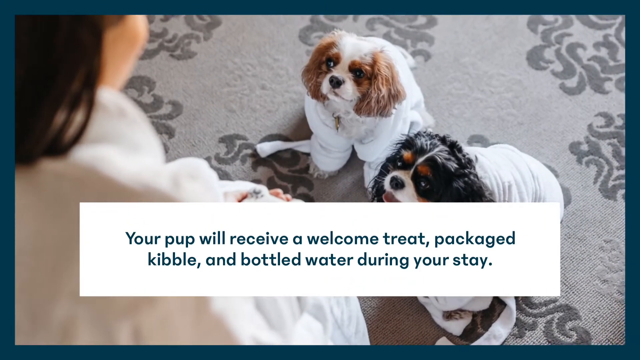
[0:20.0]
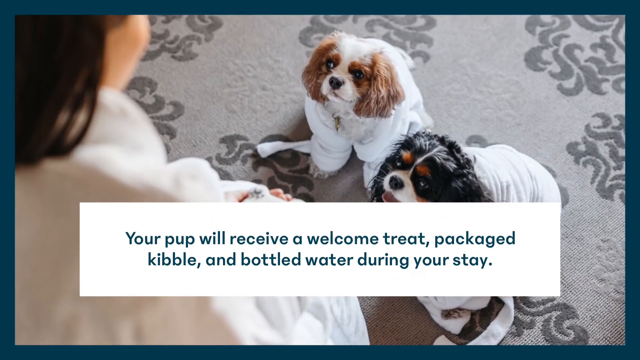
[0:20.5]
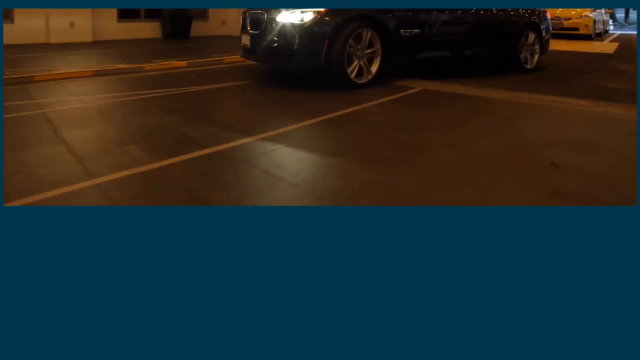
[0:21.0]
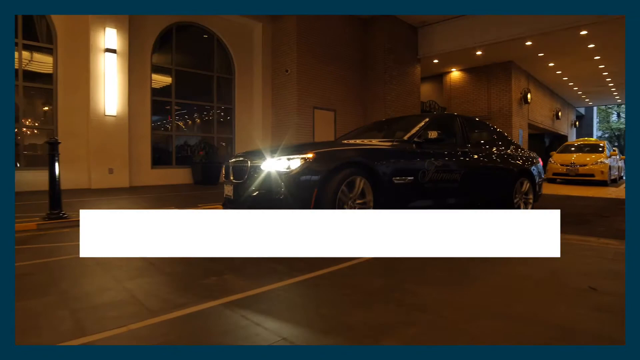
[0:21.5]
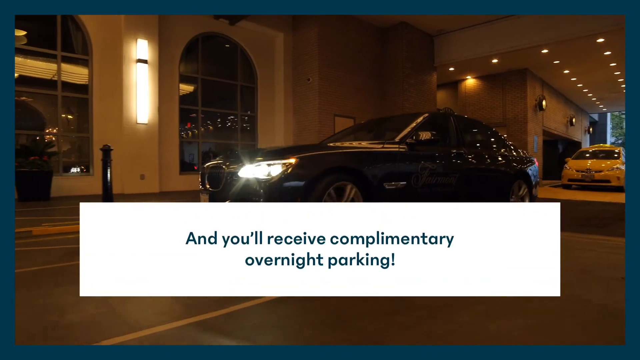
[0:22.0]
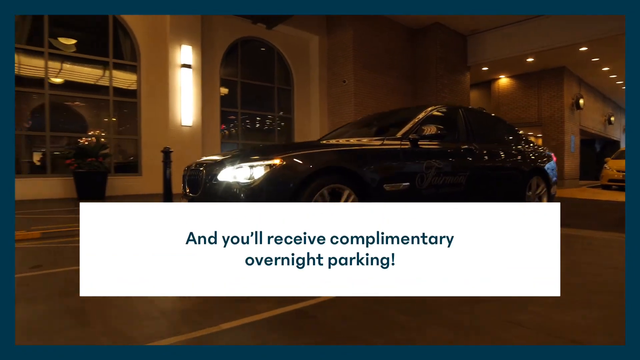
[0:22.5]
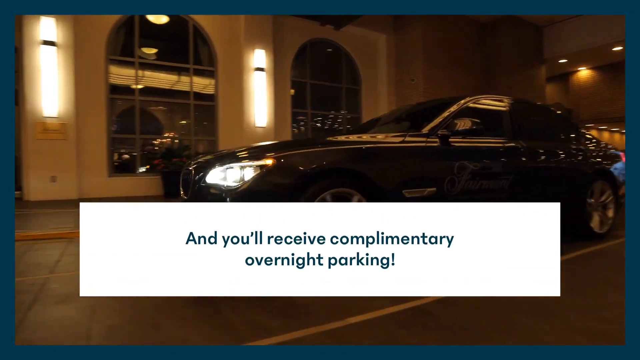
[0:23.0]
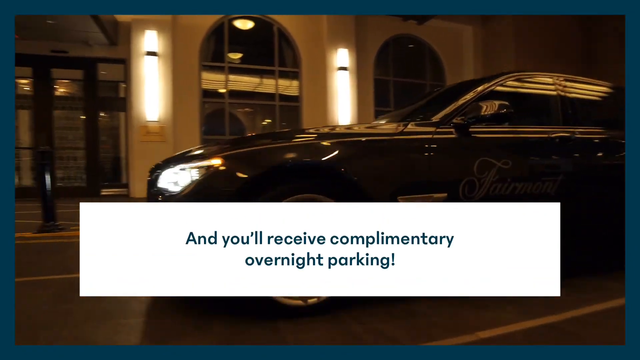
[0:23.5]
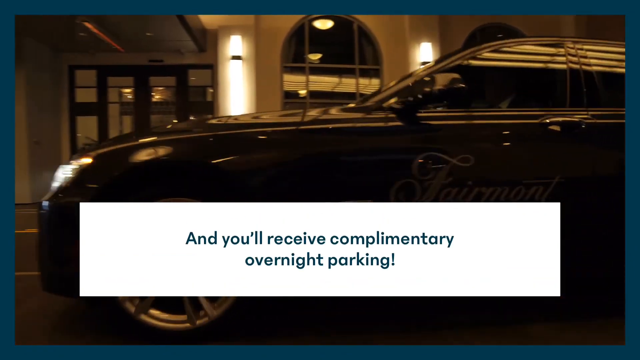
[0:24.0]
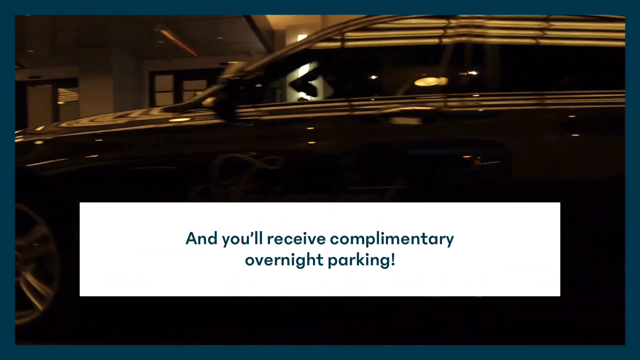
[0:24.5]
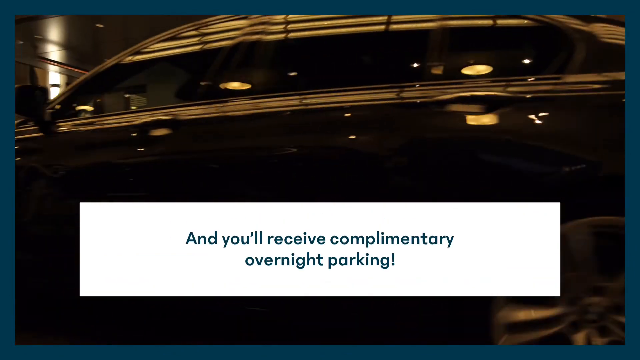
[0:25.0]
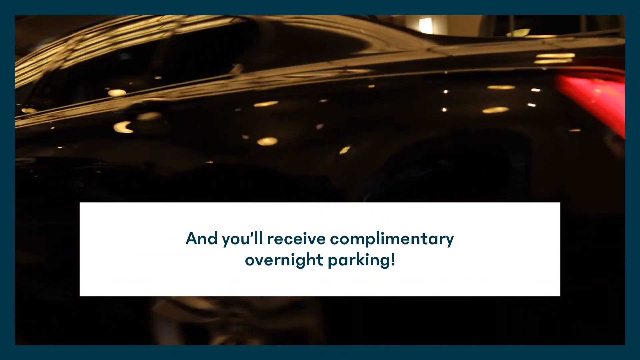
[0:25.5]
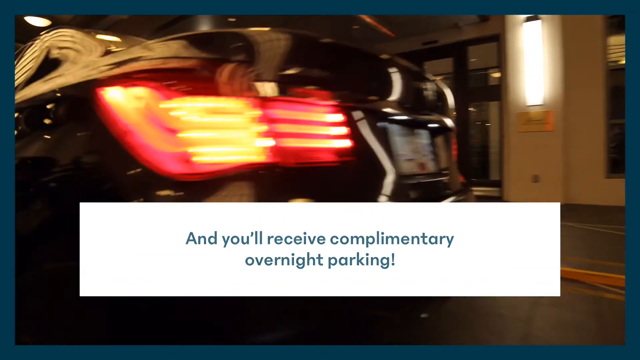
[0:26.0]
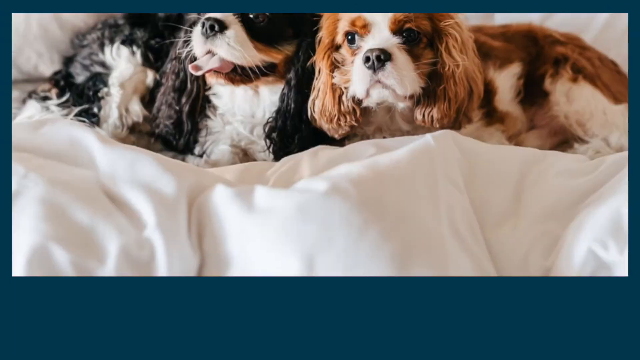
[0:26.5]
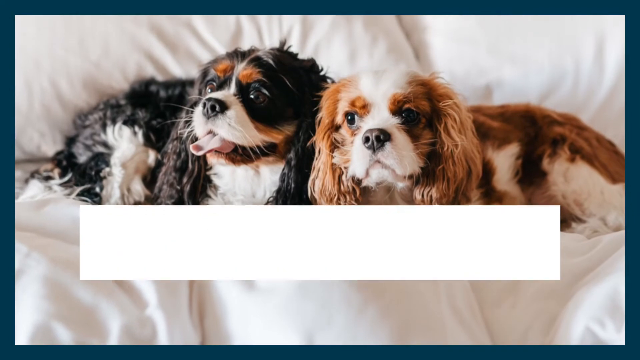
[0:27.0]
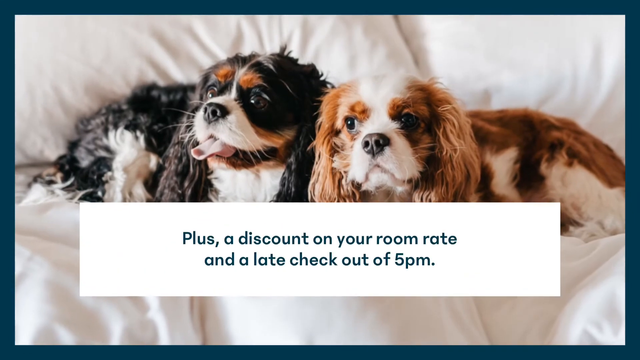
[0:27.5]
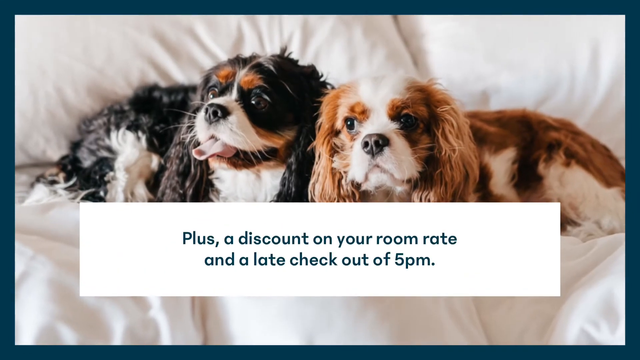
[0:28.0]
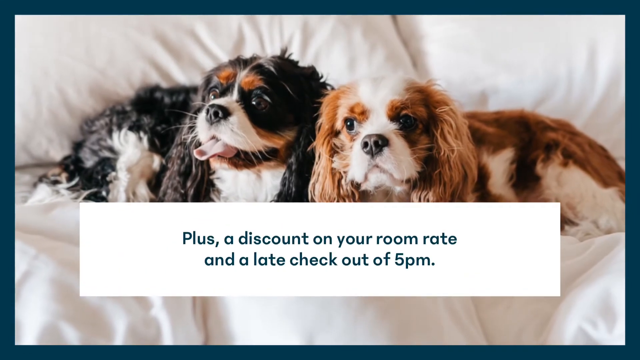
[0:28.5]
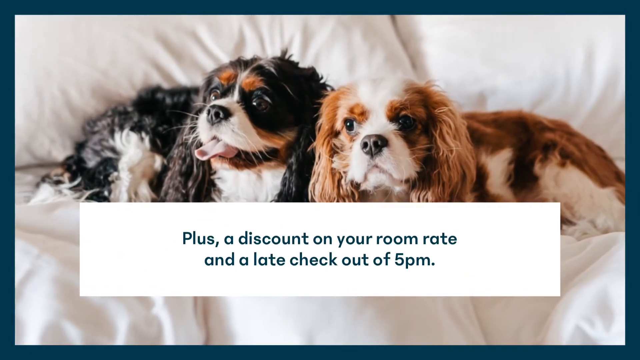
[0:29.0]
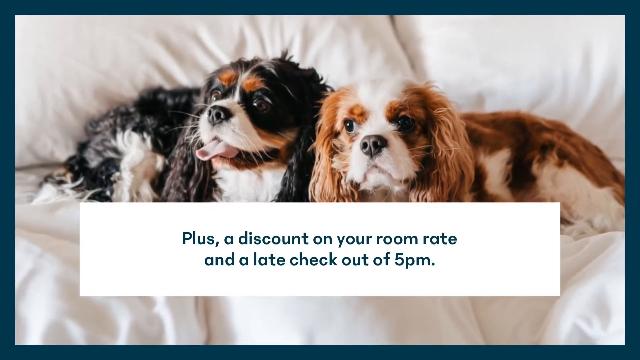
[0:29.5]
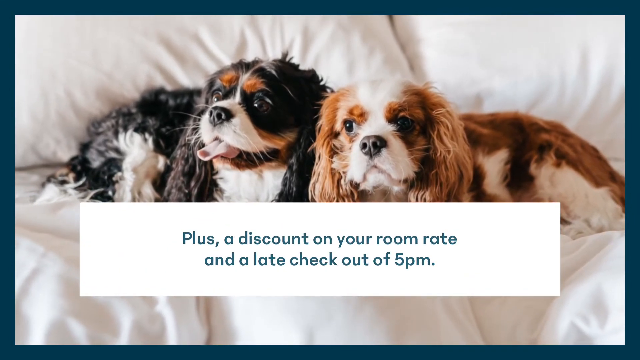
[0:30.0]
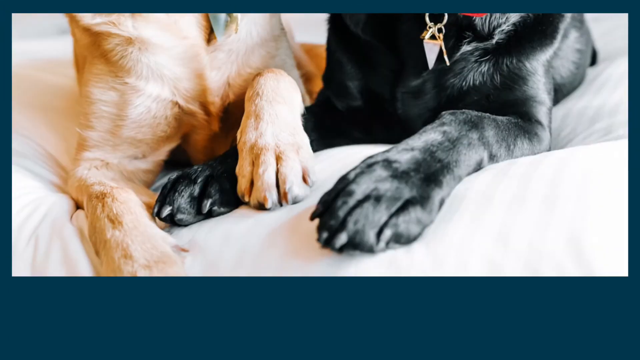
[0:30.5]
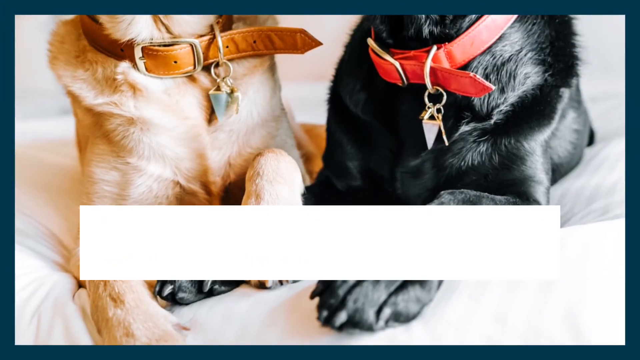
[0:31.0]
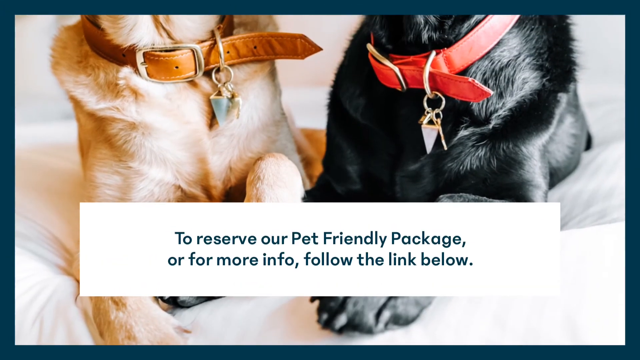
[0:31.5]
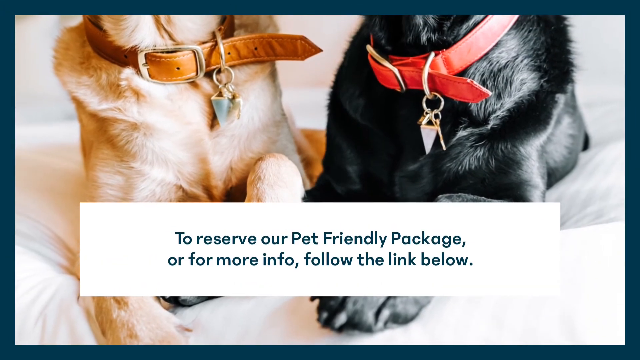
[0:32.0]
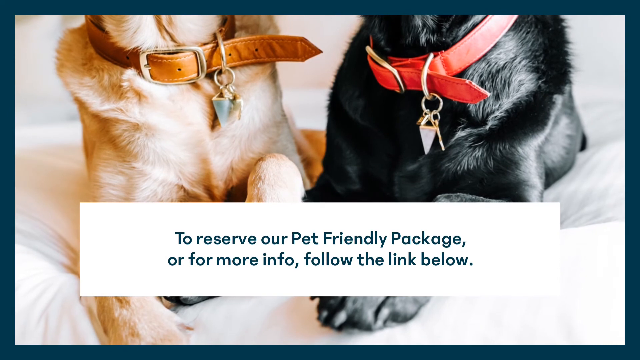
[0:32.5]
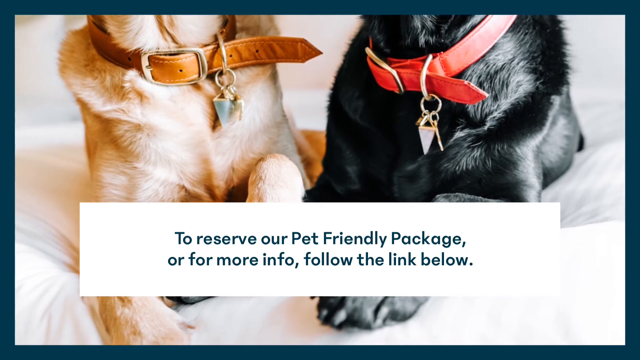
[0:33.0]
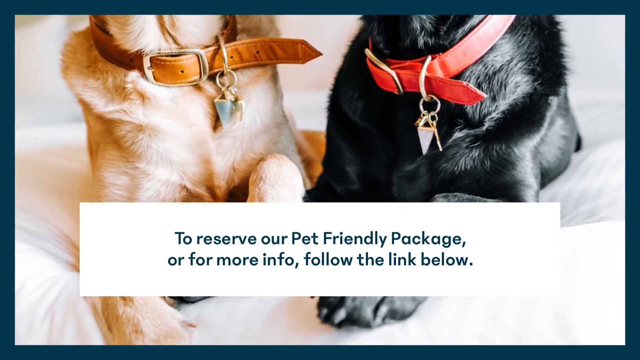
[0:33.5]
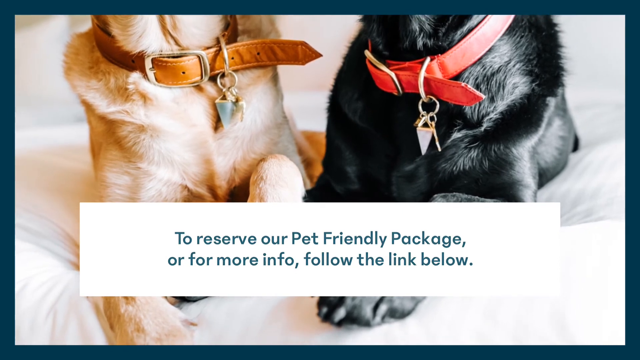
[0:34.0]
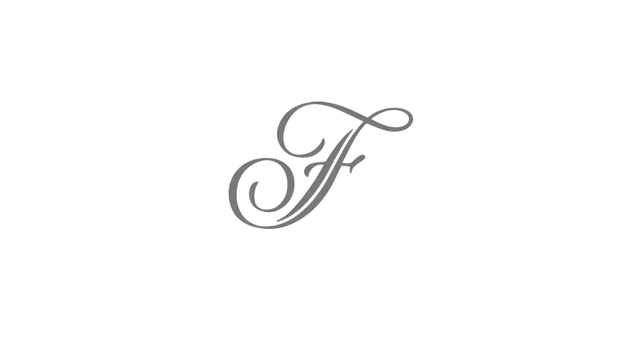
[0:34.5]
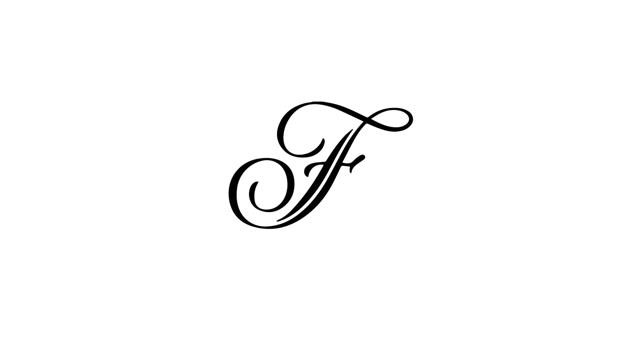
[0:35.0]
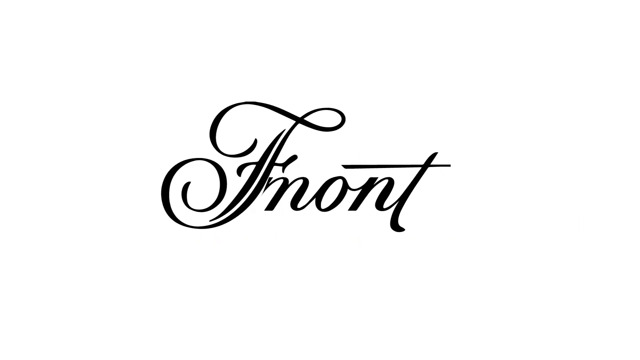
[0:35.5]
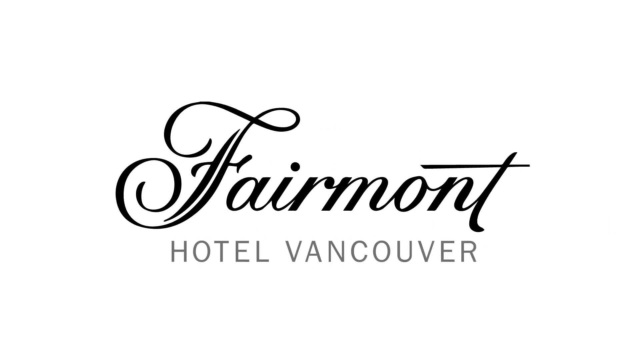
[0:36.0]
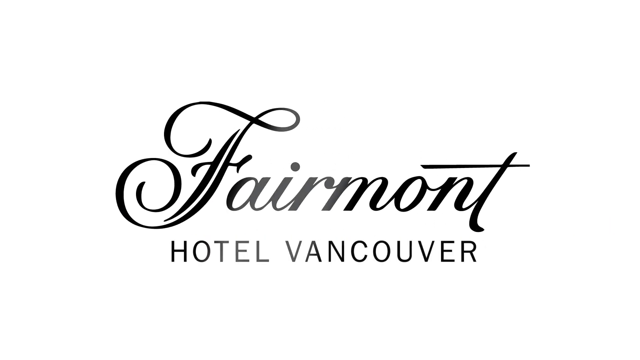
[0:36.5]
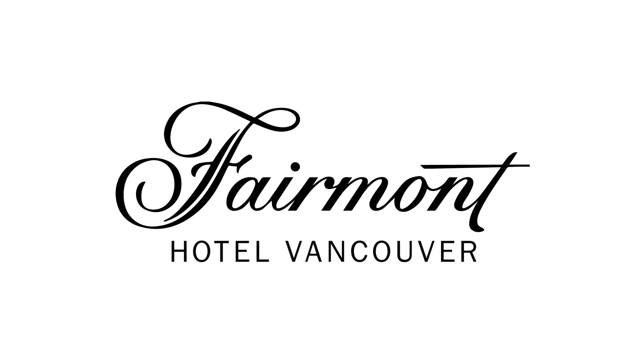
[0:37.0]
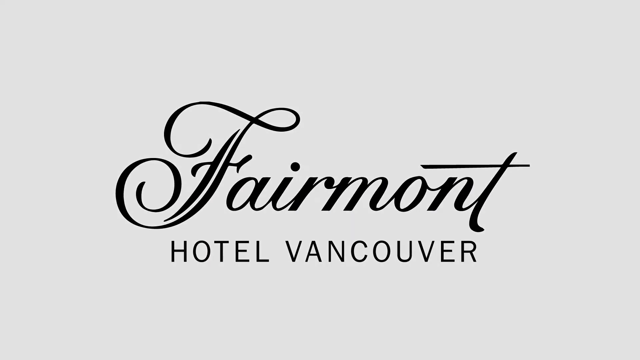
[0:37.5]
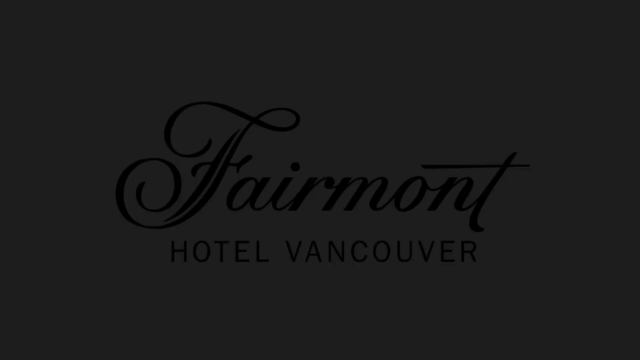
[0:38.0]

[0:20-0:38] The scene opens on an image of two dogs, one brown, black and white and one brown and white, wearing fluffy robes and sitting on a nice carpet. They are seen over the shoulder of a woman standing in front of them with something in her hands. A white rectangle with blue text inside is overlaid on top of the image, reading "your pup will receive a welcome treat, packaged kibble, and bottled water during your stay." A new image of a car pulling through some sort of entryway drops down into the screen, and the white box reads "and you'll receive complimentary overnight parking." The shot follows the car as it drives by before a new picture of two dogs sitting in a hotel bed drops into the screen; one of the dogs has his tongue out. The white box reappears and reads, in blue text, "plus a discount on your room rate and a late checkout of 5 p.m." An image of two dogs, the labs again, drops down into the screen. Their heads are cut off because the image is focused on their paws, and one has his paw resting on top of the other's. The white box appears and reads "to reserve our pet friendly package or for more info follow the link below." The video then transitions to a plain white screen with a stylized F on it. The F scrolls to the side to spell out "Fairmont," with the words "Hotel Vancouver" appearing below the logo, which remains for the last seconds of the ad.